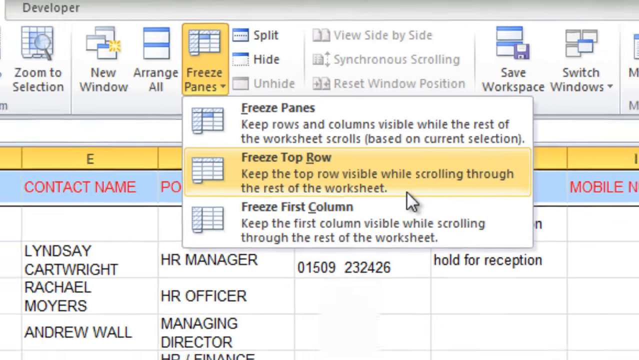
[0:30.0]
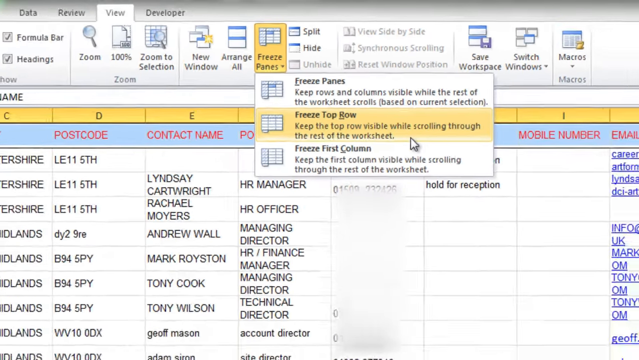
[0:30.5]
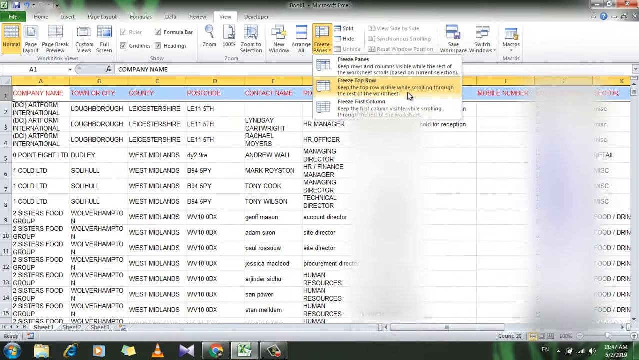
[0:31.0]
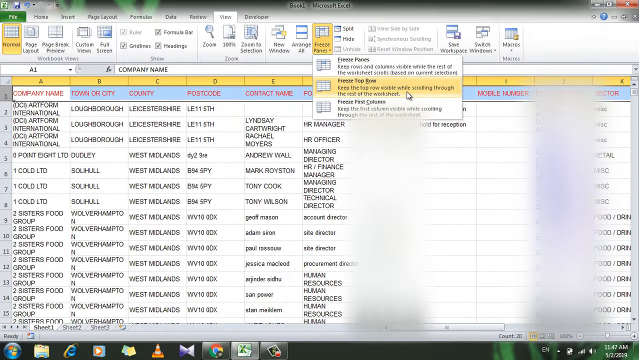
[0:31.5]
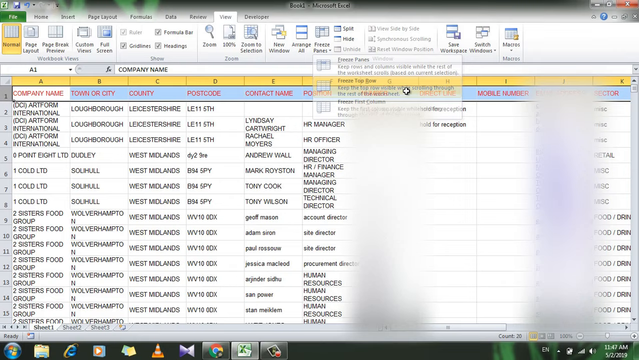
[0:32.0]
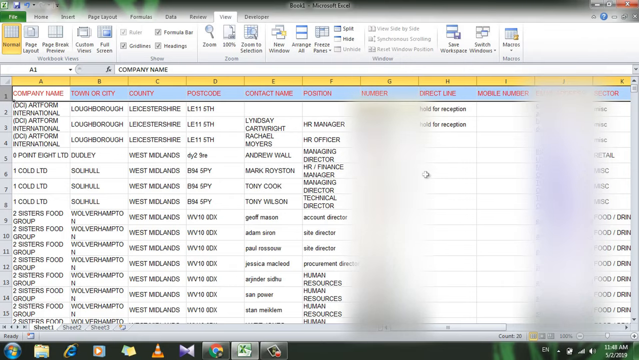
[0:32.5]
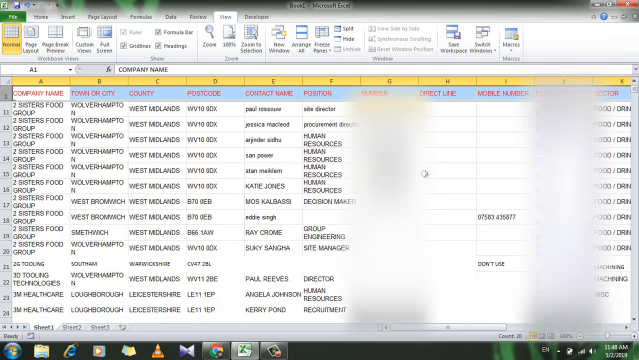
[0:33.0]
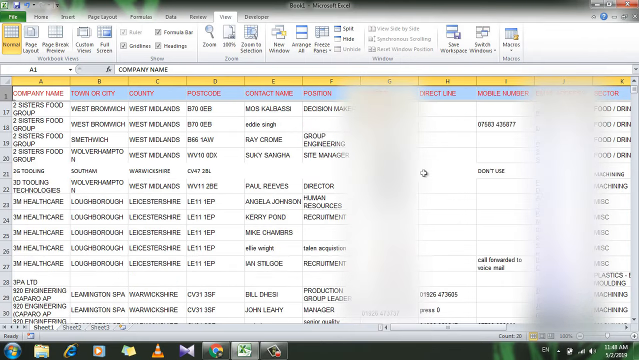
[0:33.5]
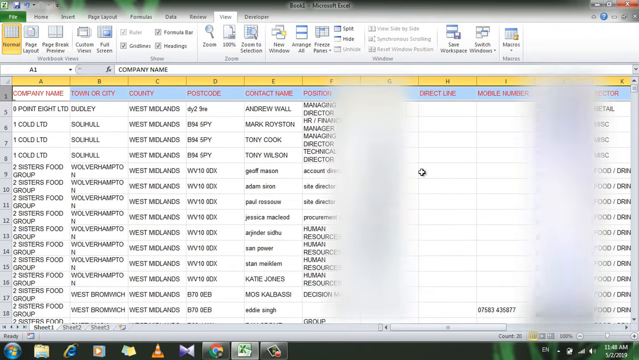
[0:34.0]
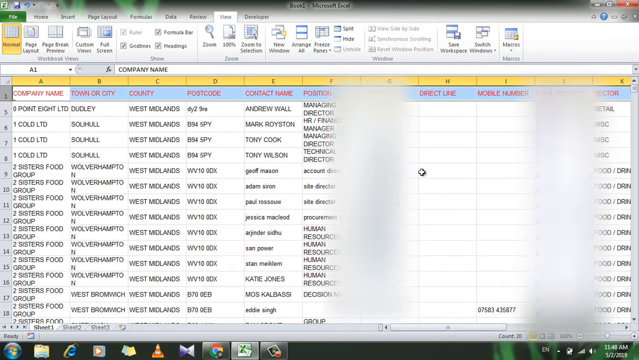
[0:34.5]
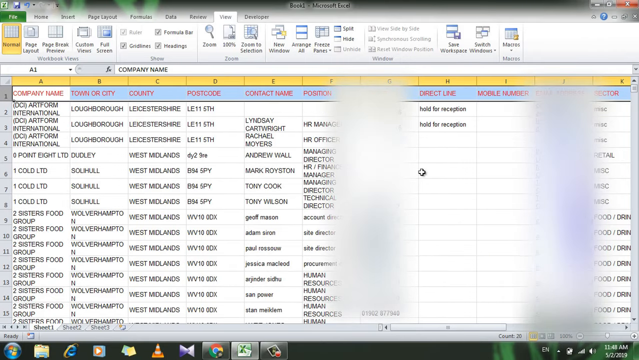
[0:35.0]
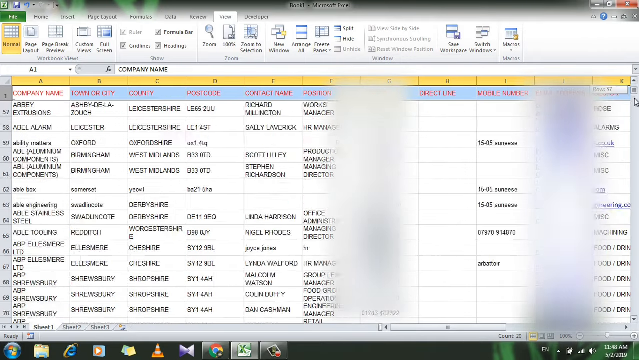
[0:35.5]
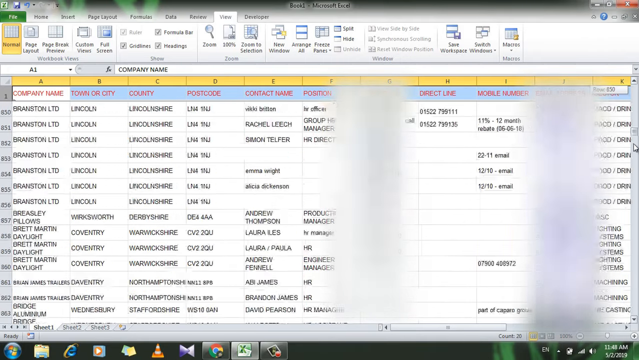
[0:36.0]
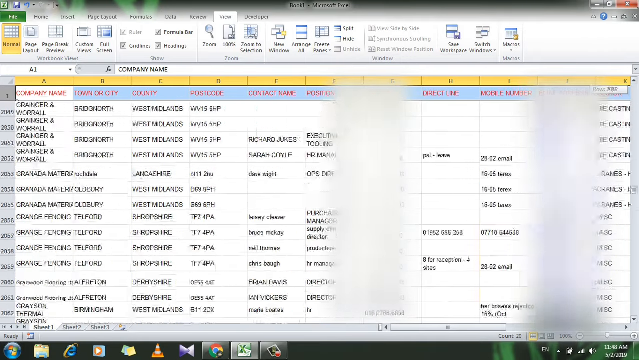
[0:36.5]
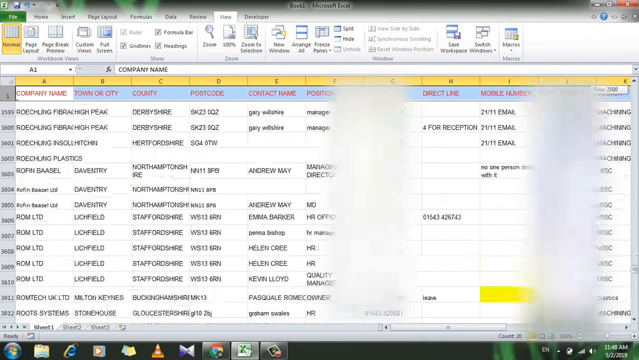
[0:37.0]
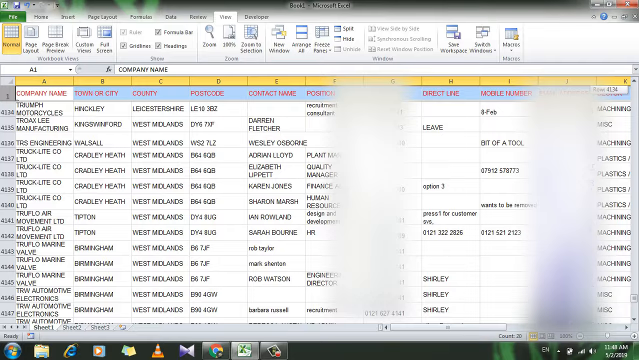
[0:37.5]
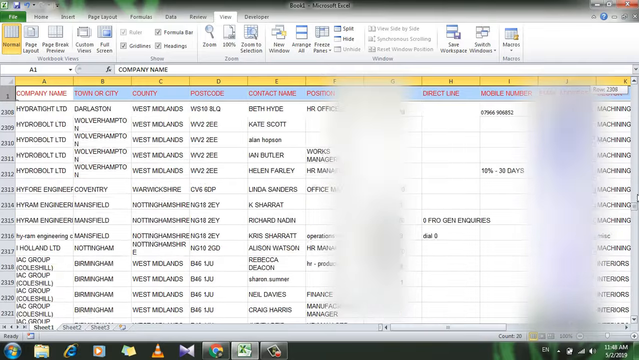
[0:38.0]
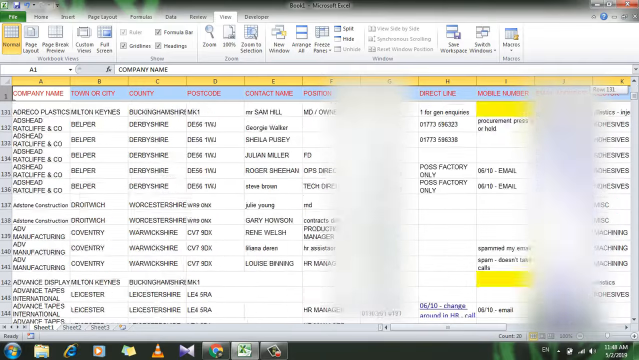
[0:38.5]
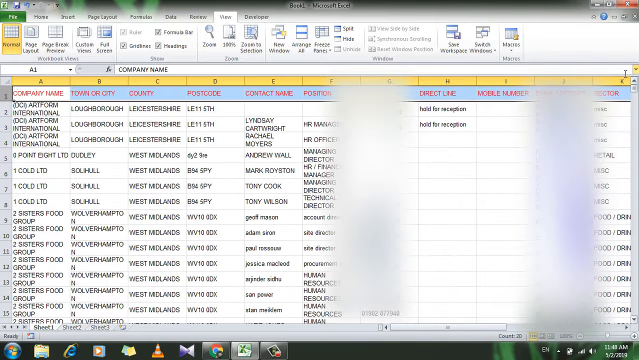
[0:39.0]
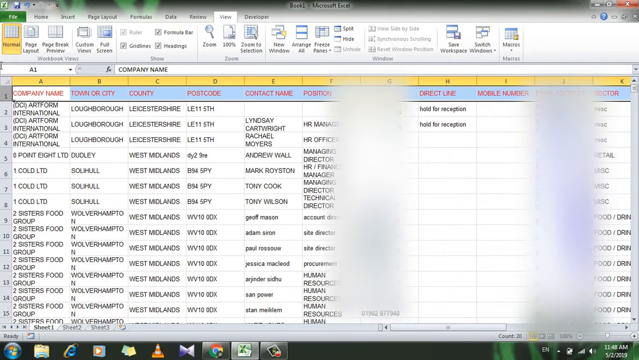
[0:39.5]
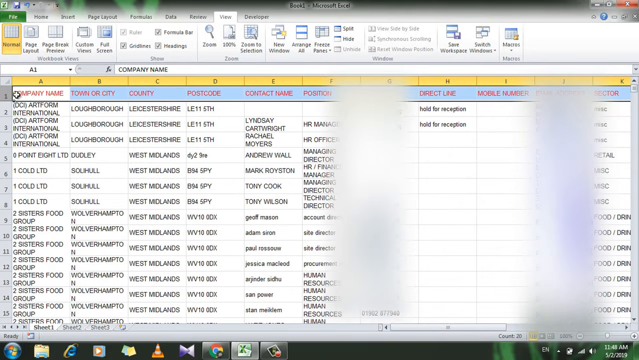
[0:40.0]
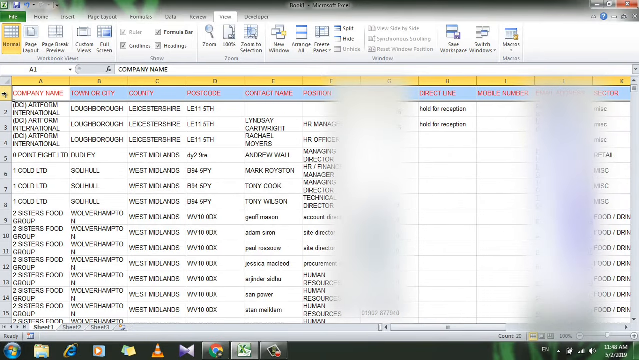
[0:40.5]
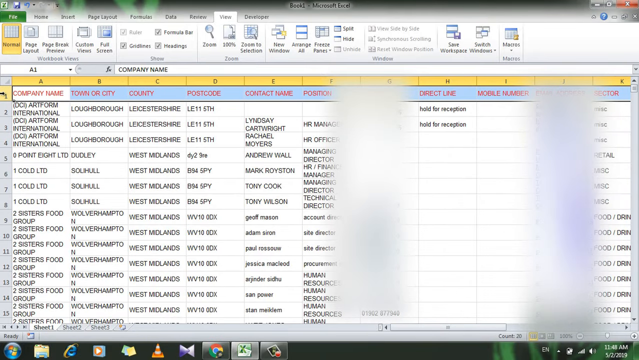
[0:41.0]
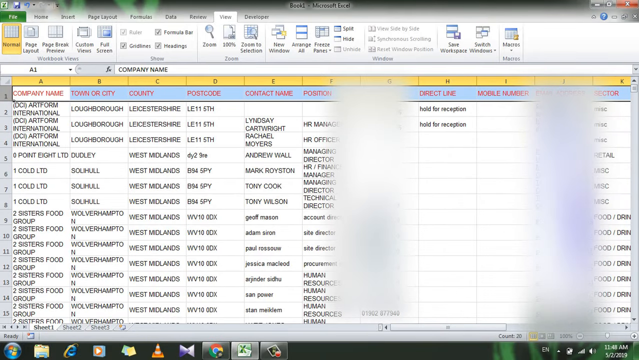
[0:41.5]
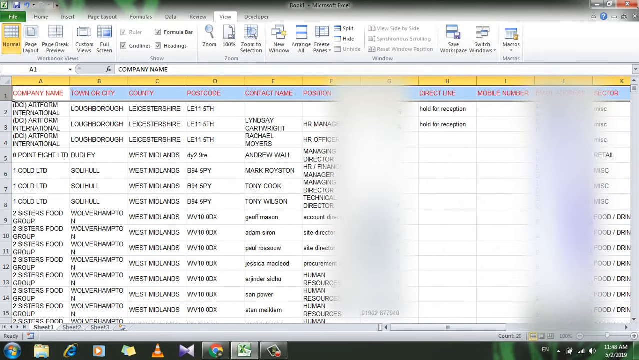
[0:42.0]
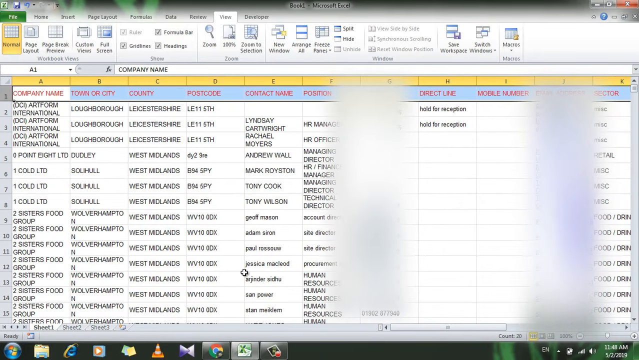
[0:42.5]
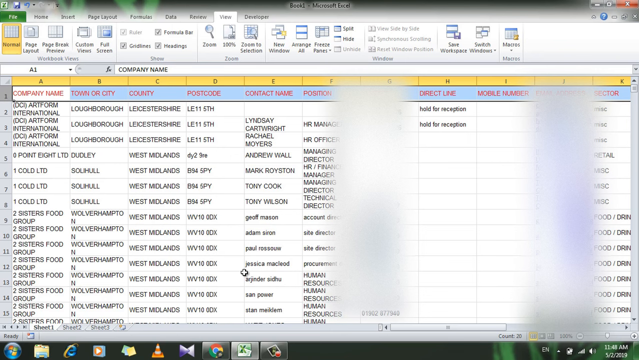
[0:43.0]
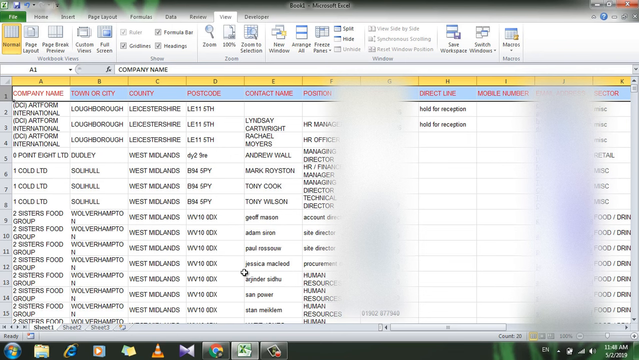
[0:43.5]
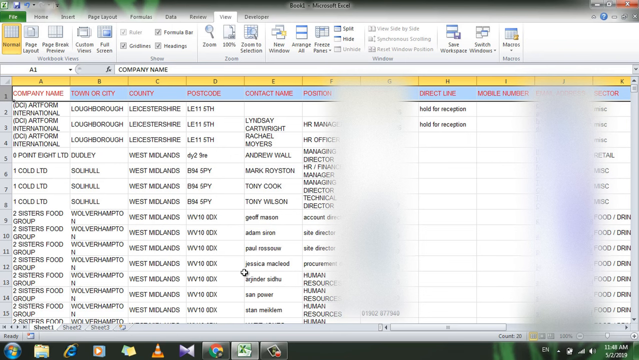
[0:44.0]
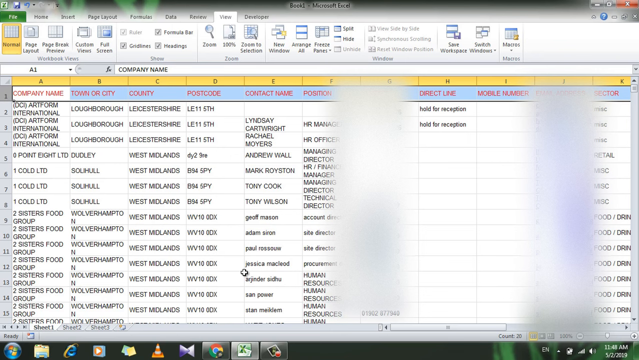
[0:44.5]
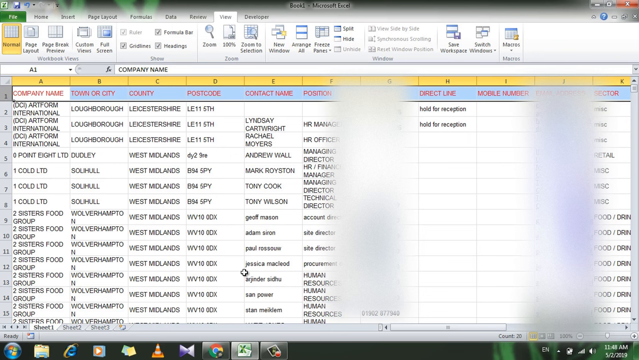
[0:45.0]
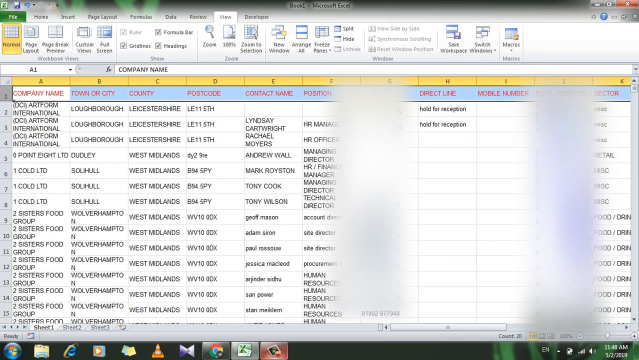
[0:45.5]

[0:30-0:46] The person continues managing the records in the file, with details such as documents, emails and locations.